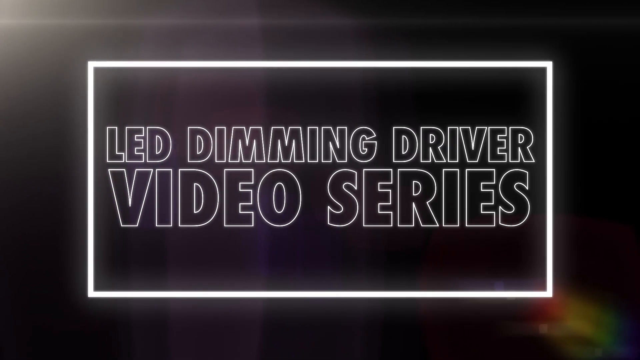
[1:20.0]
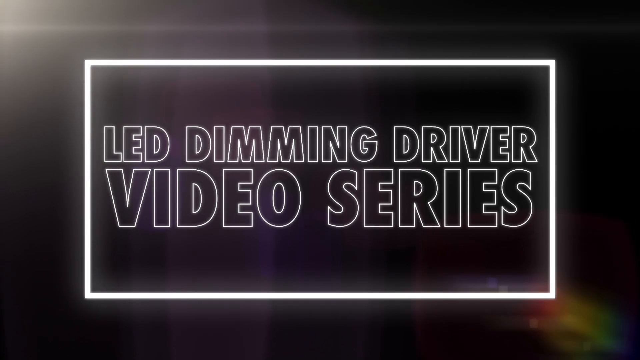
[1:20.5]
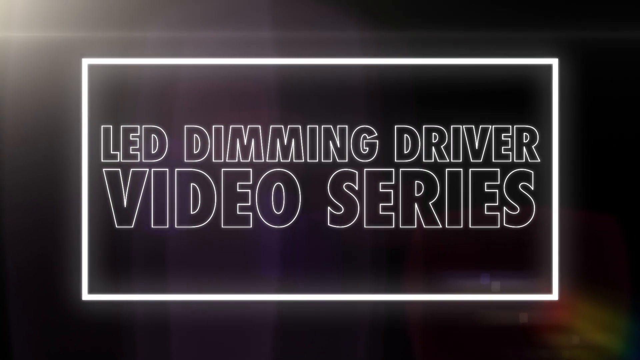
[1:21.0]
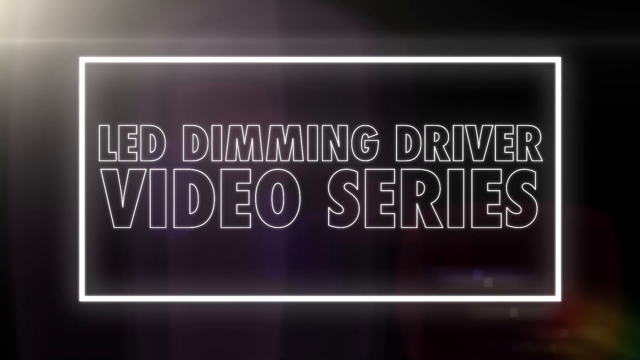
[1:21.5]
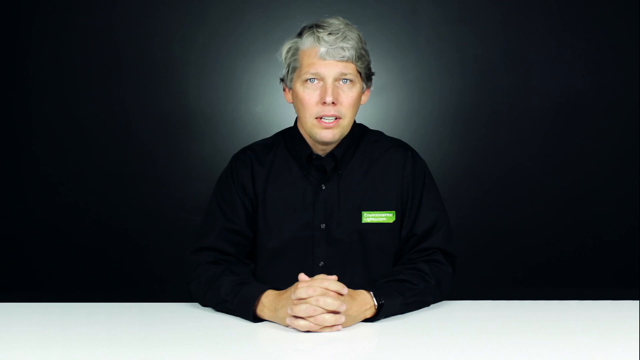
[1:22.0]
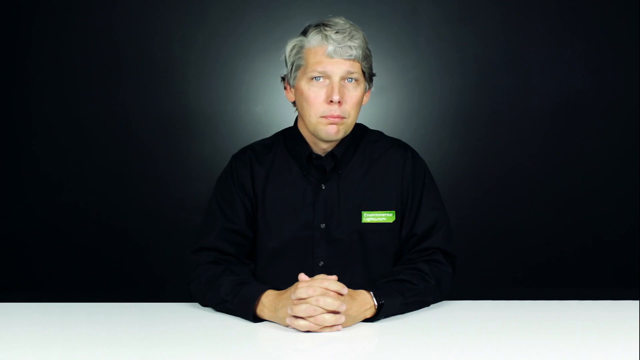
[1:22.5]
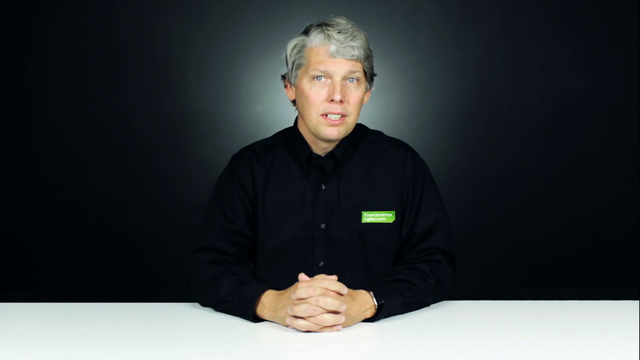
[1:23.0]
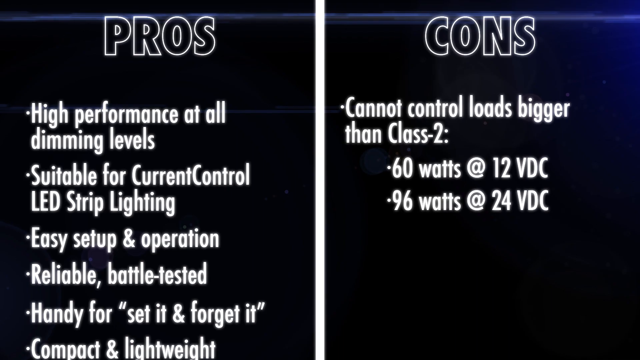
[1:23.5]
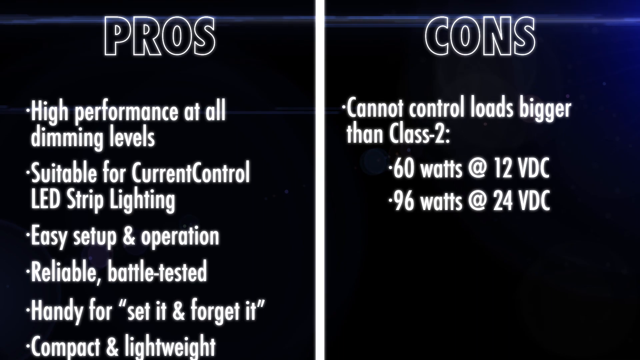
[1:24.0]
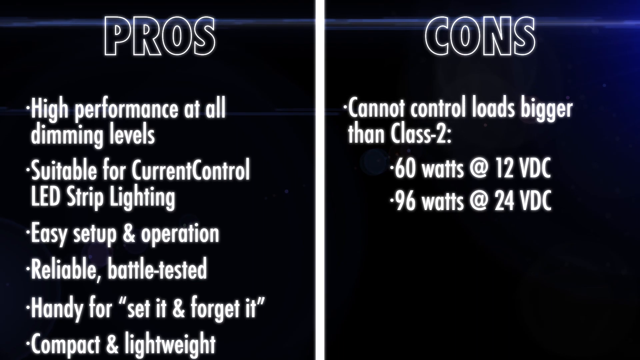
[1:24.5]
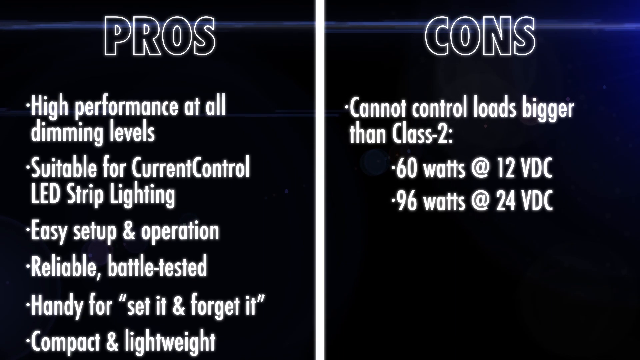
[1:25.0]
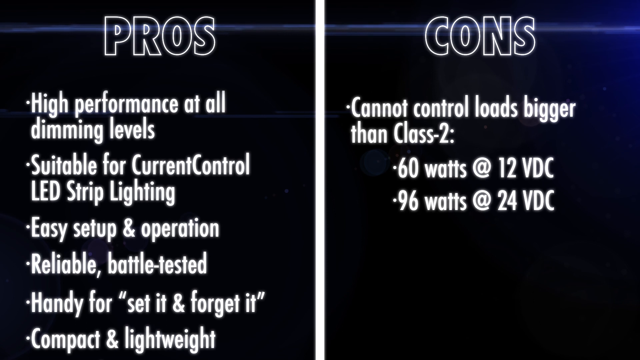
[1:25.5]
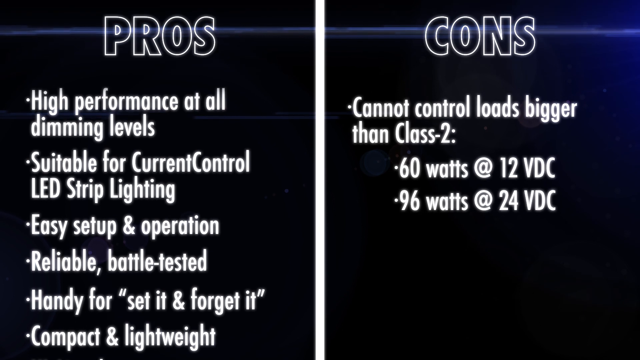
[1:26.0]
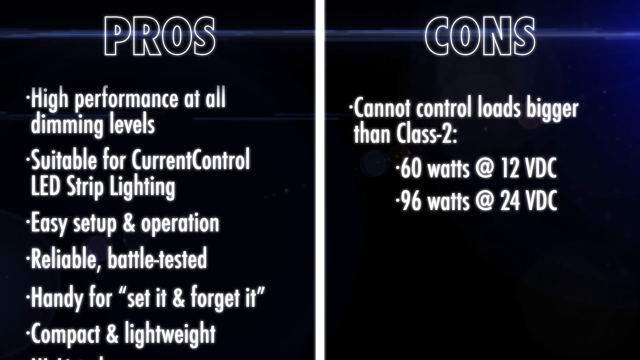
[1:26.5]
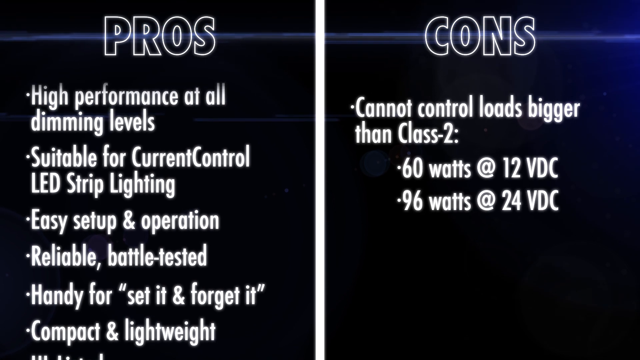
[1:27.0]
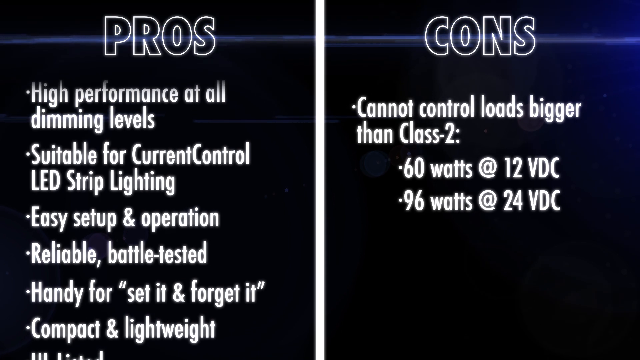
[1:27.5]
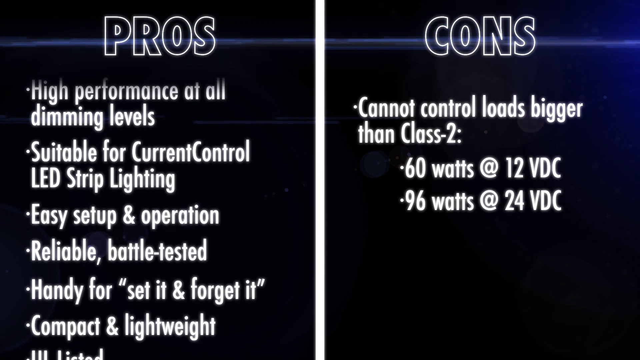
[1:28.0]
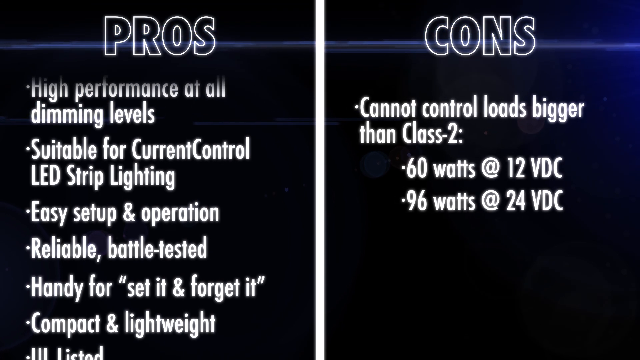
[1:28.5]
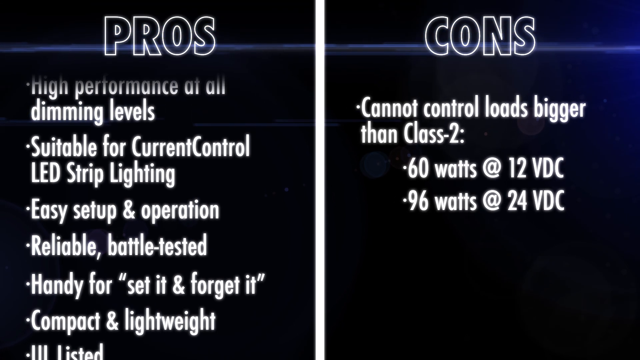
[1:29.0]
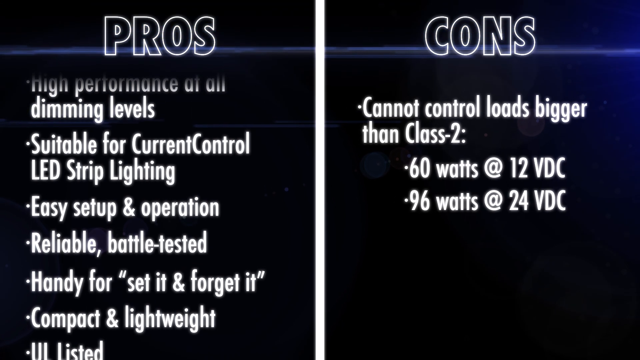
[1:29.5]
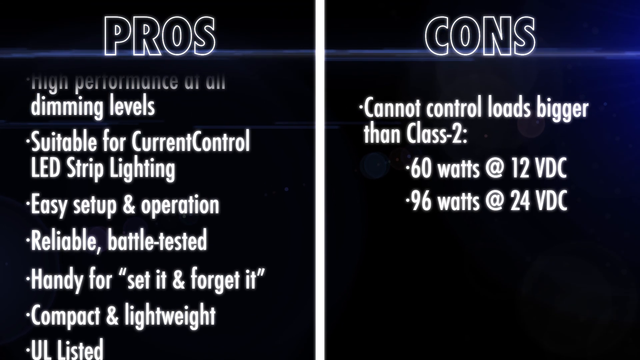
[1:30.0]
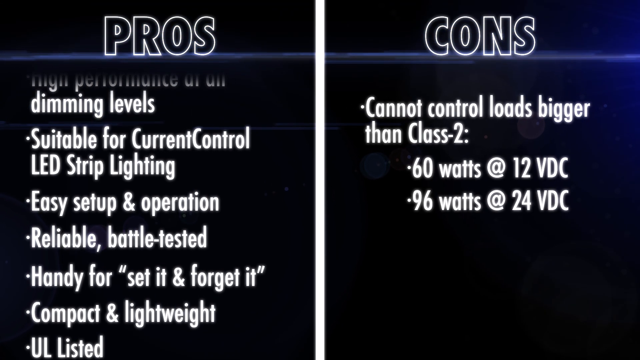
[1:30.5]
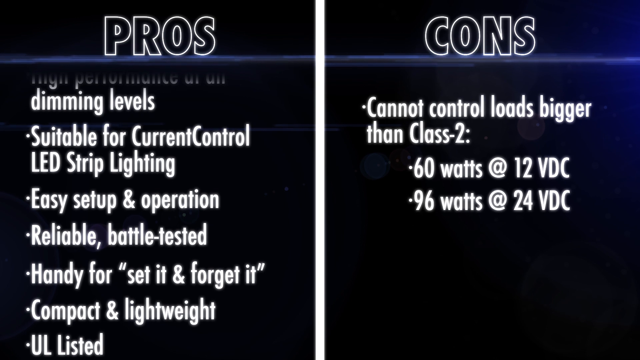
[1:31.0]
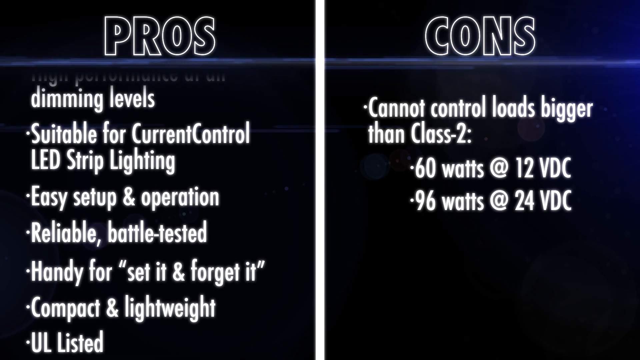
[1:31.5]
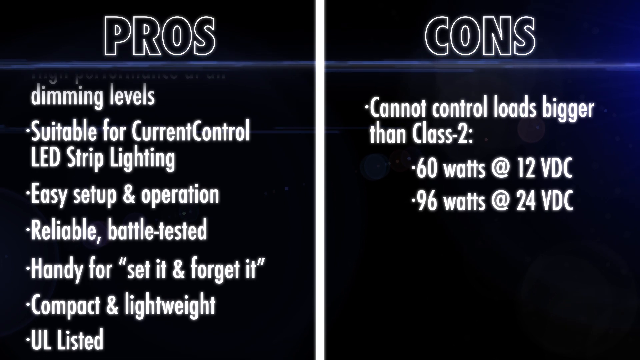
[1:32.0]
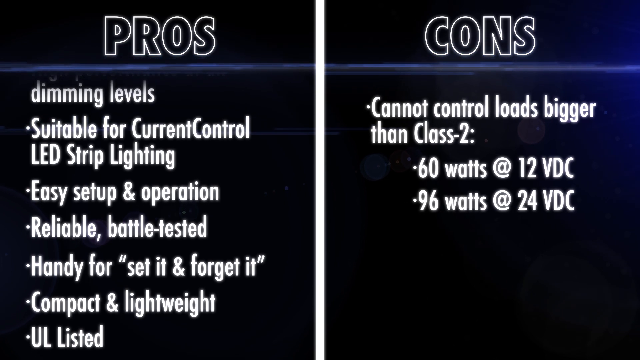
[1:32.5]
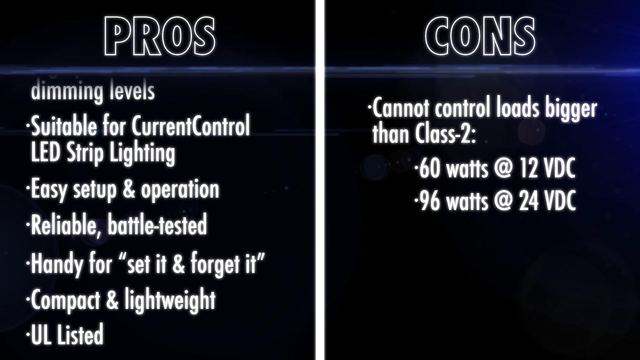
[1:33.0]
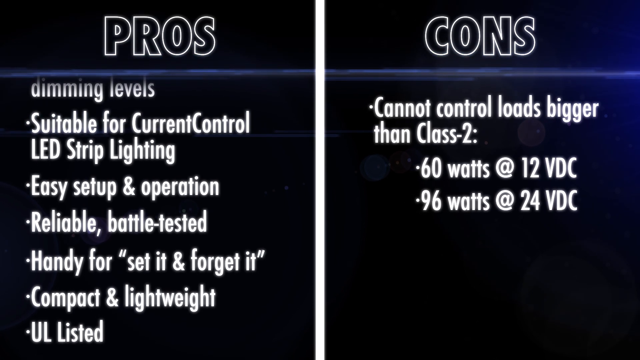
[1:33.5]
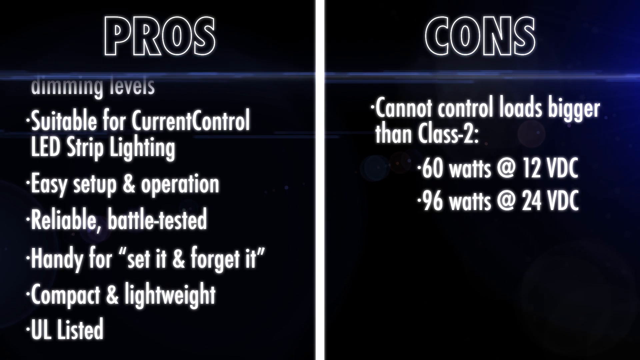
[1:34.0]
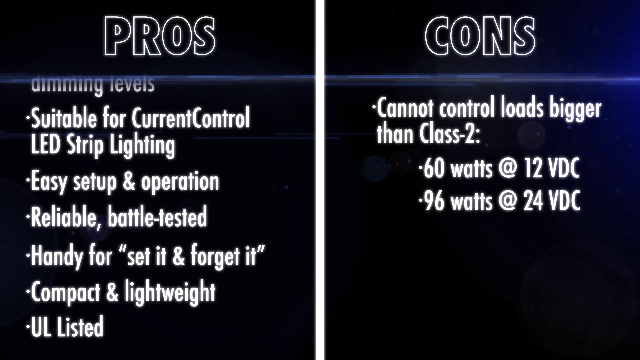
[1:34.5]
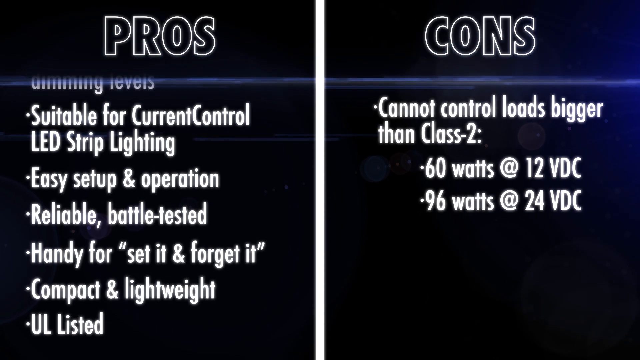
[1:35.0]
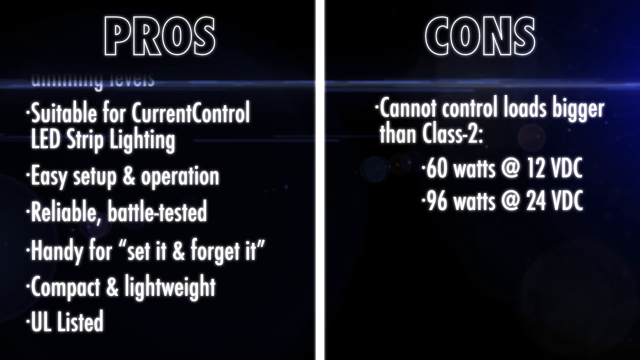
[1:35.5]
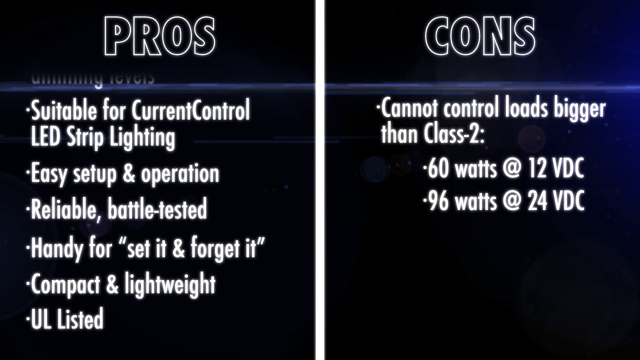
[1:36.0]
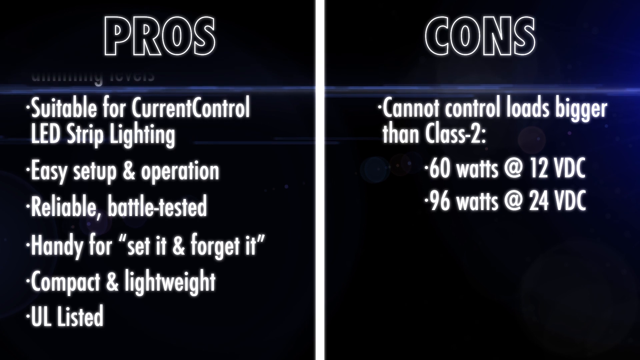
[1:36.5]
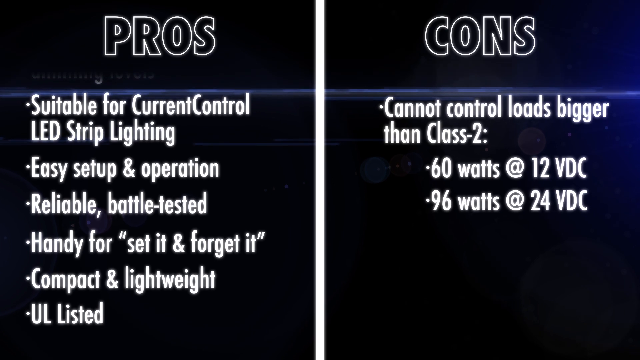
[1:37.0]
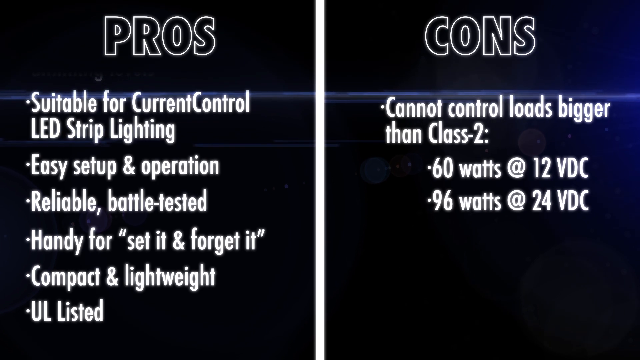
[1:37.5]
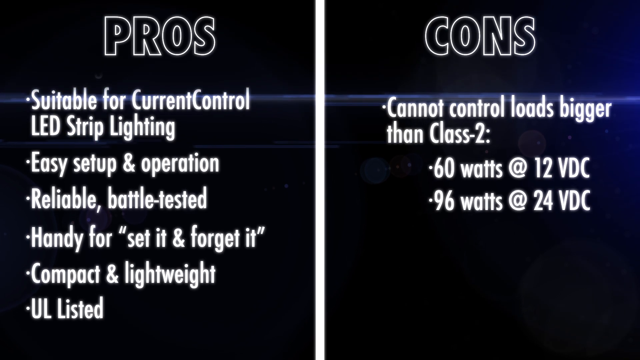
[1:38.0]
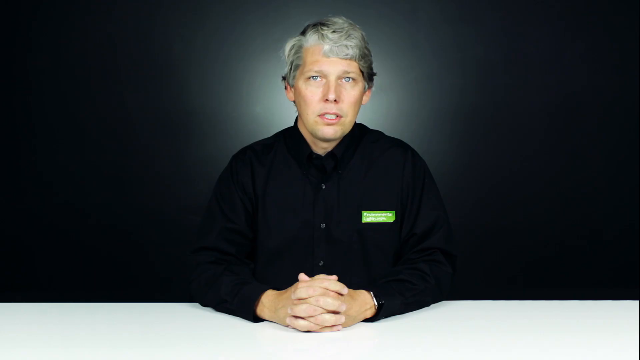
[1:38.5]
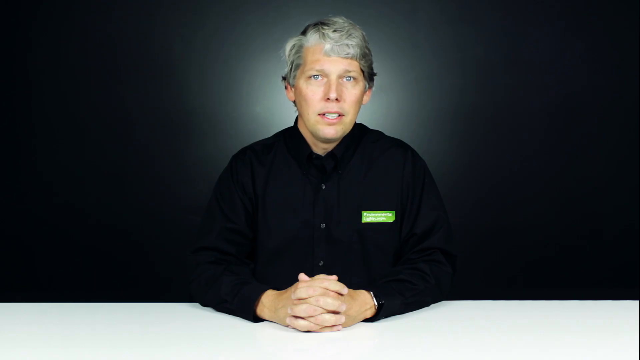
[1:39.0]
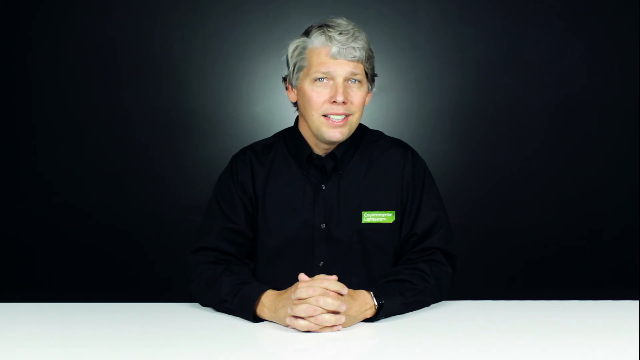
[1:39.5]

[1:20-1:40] The video indicates an LED timing driver video series. A man wearing a black t-shirt is describing what is going on. Information shown states that it can control loads bigger than class 2, with 10 watts and 12 VDC, and 96 watts and 24 VDC.